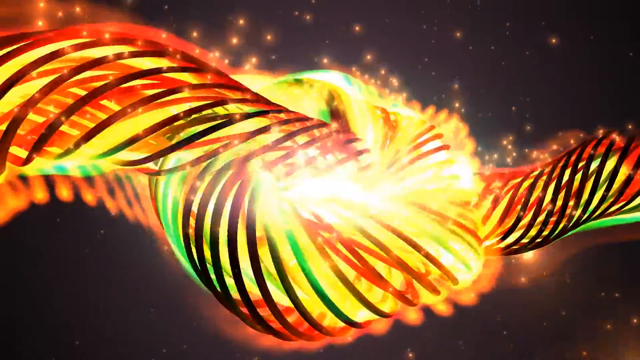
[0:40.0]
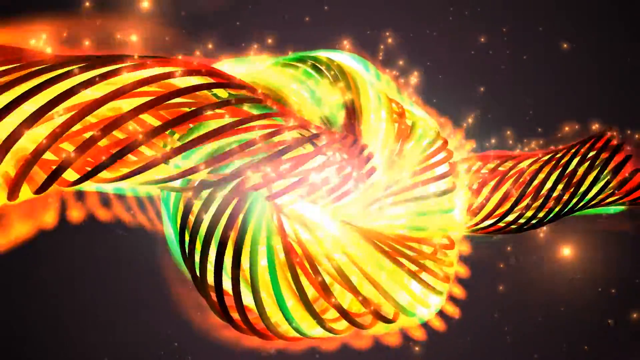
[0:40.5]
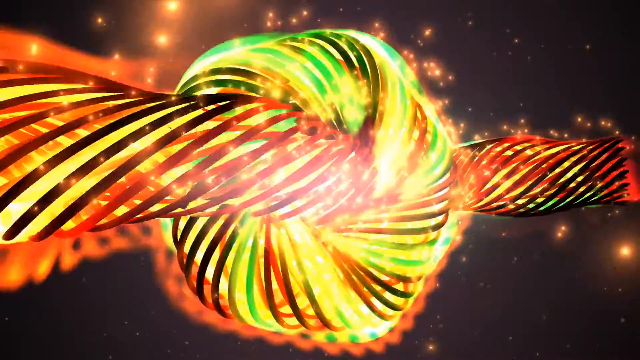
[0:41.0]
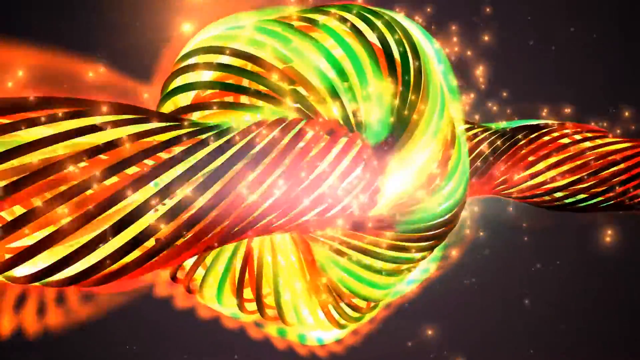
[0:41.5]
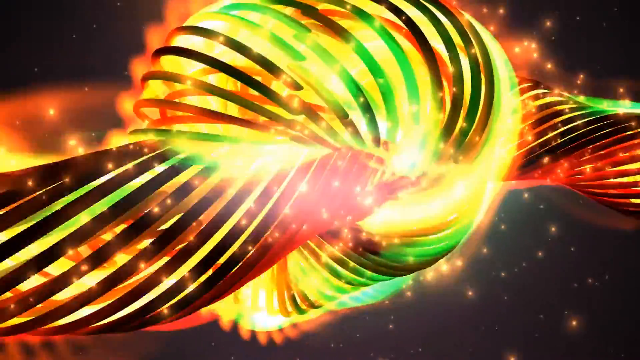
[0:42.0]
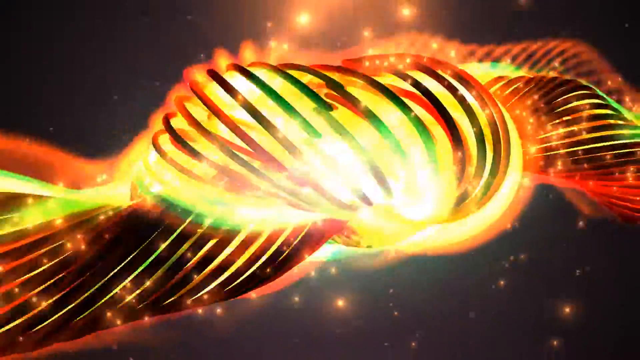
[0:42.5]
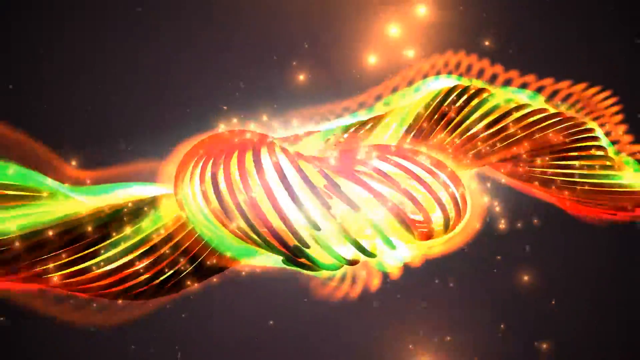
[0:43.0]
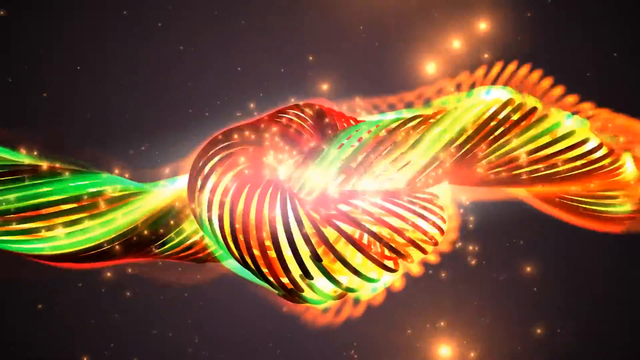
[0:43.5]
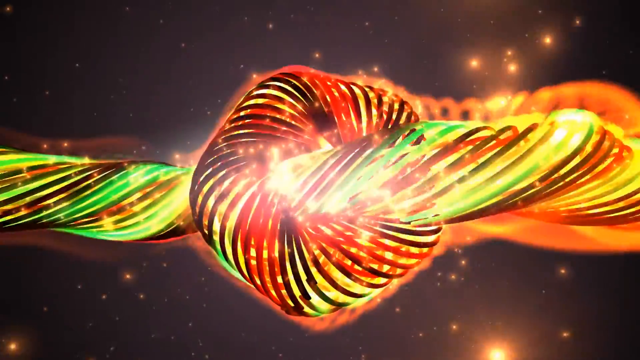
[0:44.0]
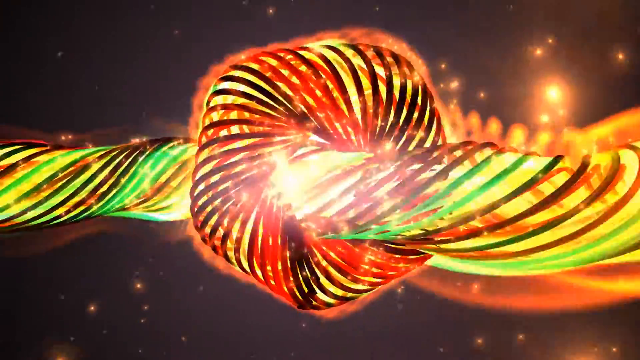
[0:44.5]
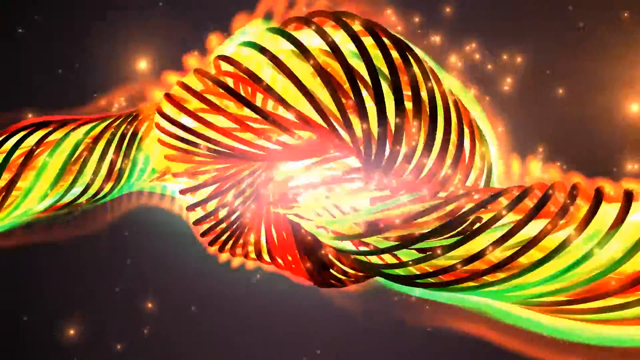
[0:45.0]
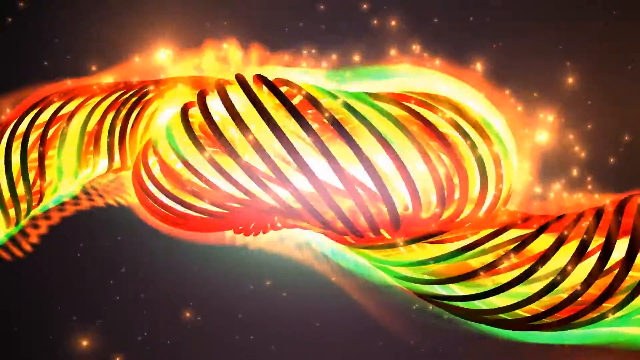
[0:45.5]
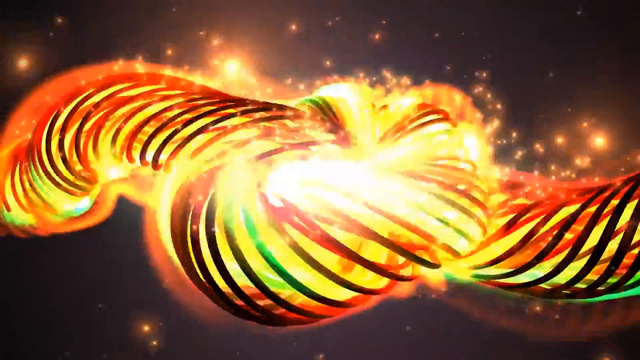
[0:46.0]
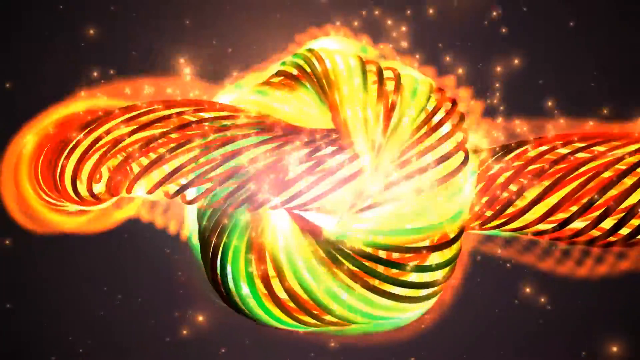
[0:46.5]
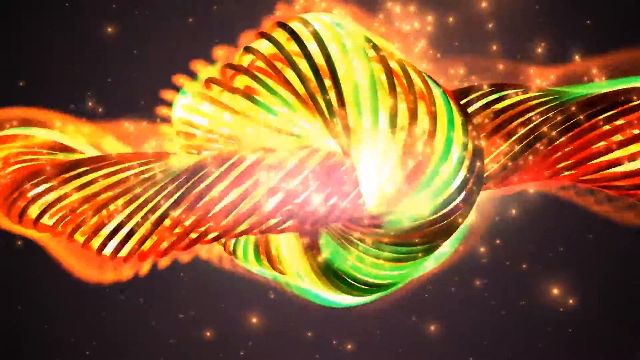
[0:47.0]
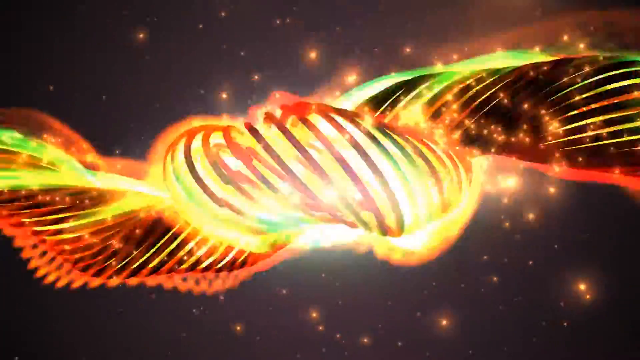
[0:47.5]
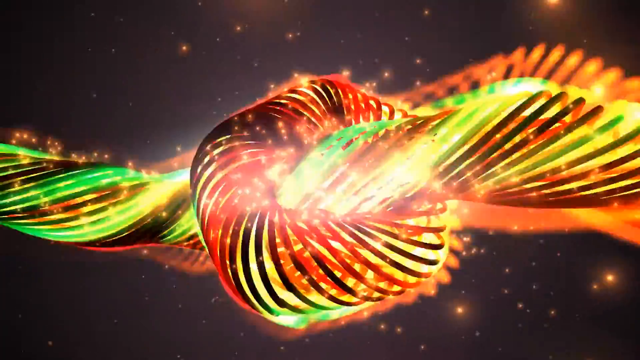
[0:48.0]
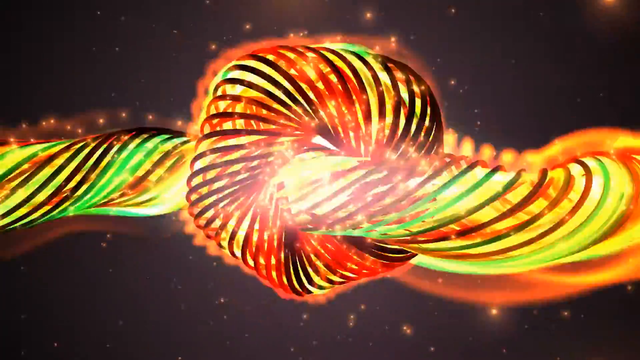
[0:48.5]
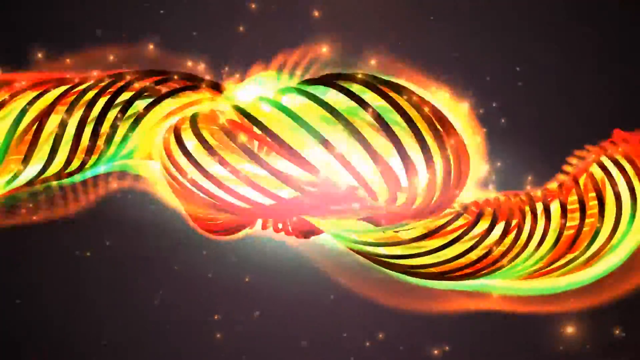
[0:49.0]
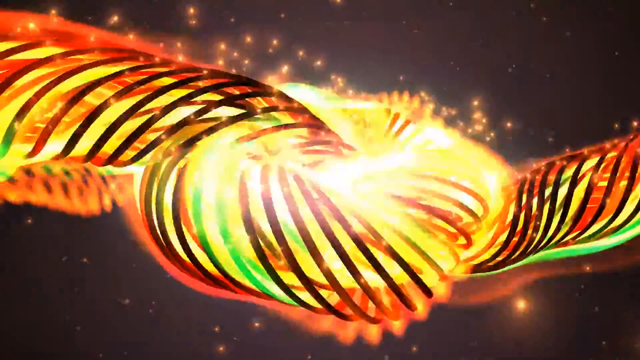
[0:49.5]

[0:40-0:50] The left side is closer in and up toward the top as the object turns; the left side goes up while the right goes down, then the right goes up while the left goes down. On the middle piece the coils are a little more separated, and it looks brighter in the center, more yellow and vibrant. A little of the coil hue comes off the bottom on the left side. As it twists, the camera slowly zooms out, with more little sparks coming off, especially across the top, moving to the right. The camera then zooms in super close on the center portion and back out, with the right side up high and the lower left side down lower. Every time the pieces go up high, a hue kind of shaped like a coil comes off, like a shadowy one, and the camera zooms out. Sparks shoot across and the camera zooms in. It is kind of twisting and turning, and the end on the left side is visible. It goes in toward the background and then out a little, almost like it is pulsating and vibrating as it moves. The hue is still all around it. In some parts the coils kind of separate a little so more of the inner core is visible, while in other parts they are closed in tighter so less of the core shows.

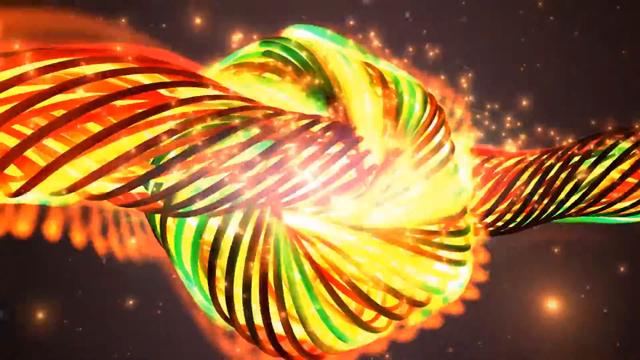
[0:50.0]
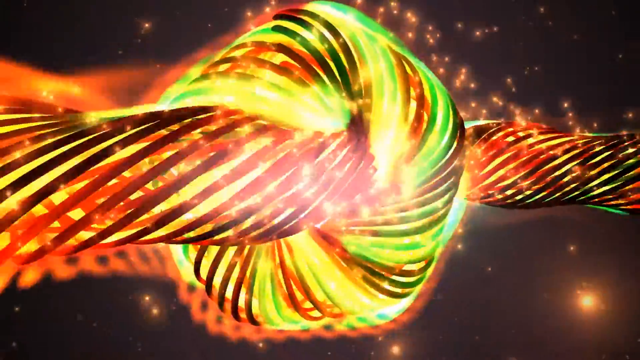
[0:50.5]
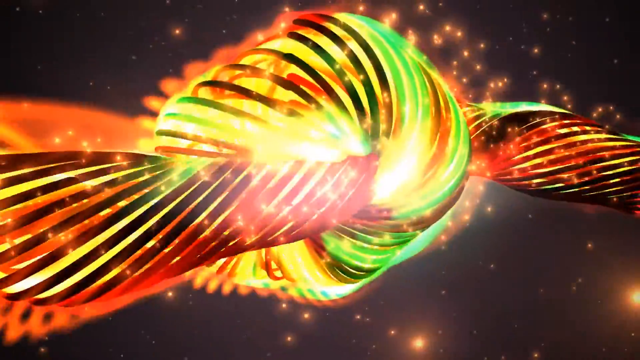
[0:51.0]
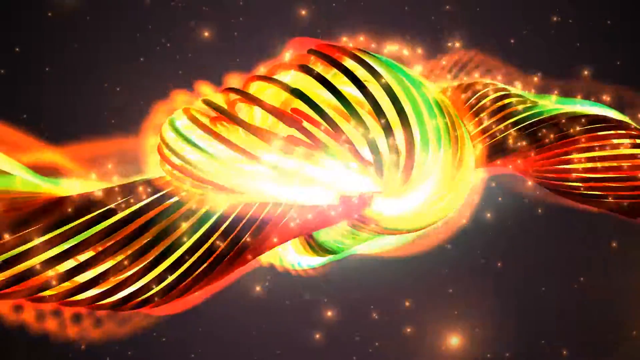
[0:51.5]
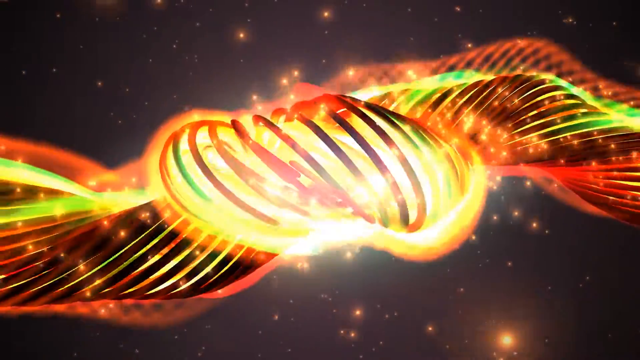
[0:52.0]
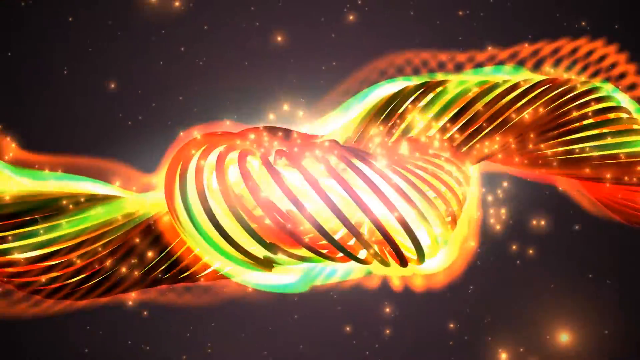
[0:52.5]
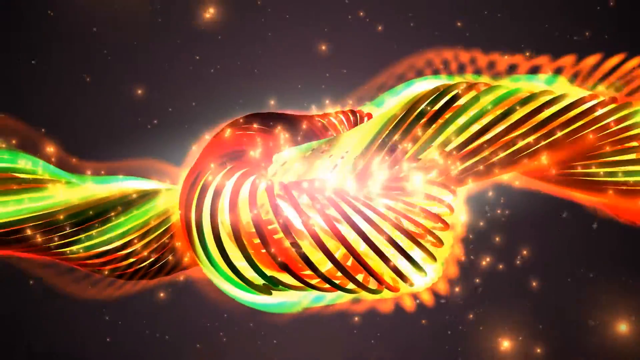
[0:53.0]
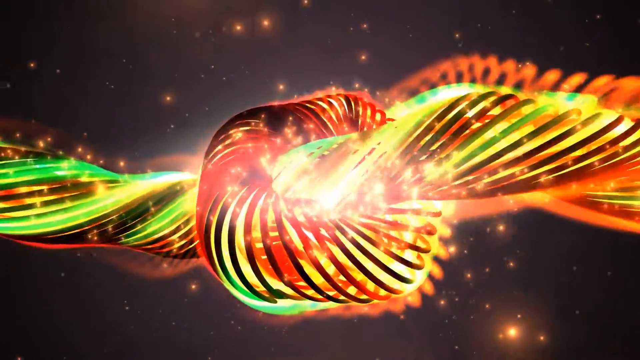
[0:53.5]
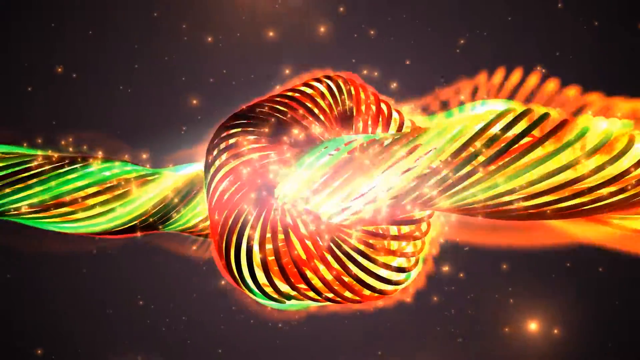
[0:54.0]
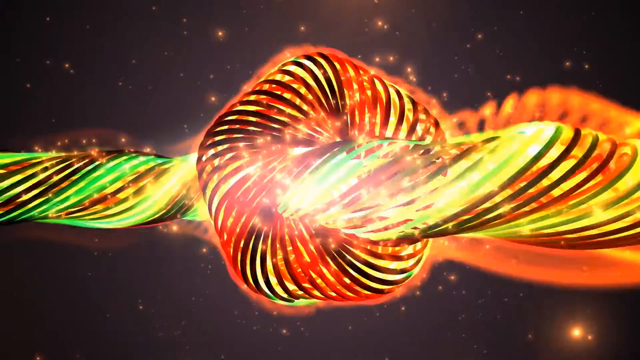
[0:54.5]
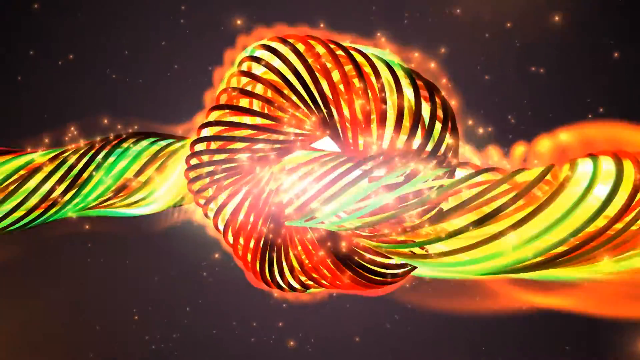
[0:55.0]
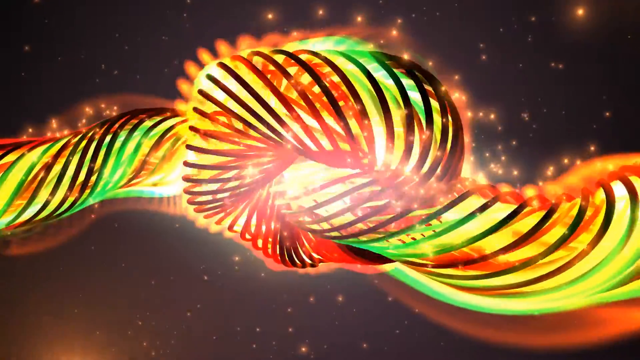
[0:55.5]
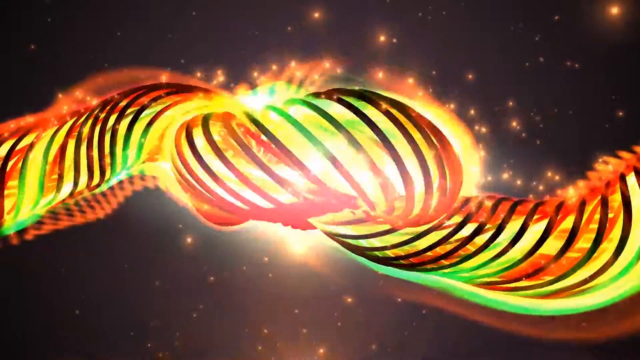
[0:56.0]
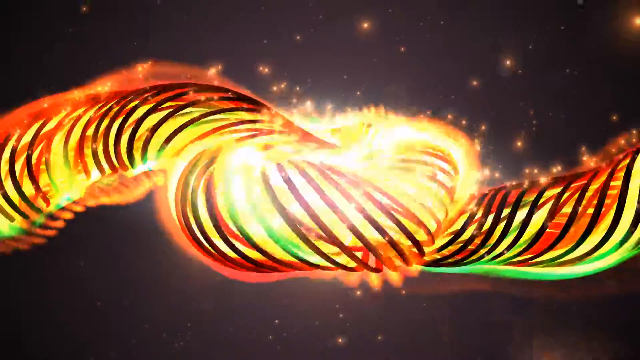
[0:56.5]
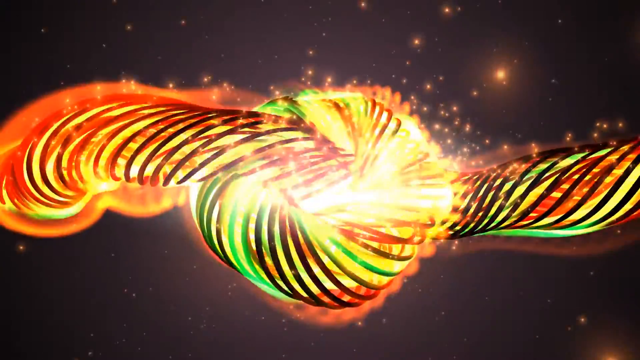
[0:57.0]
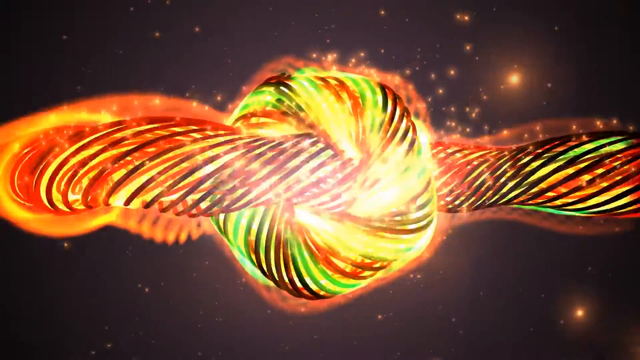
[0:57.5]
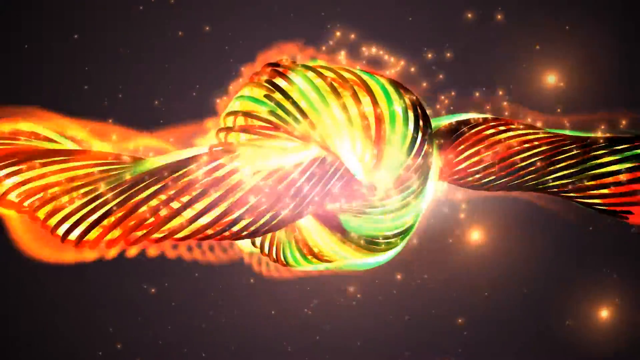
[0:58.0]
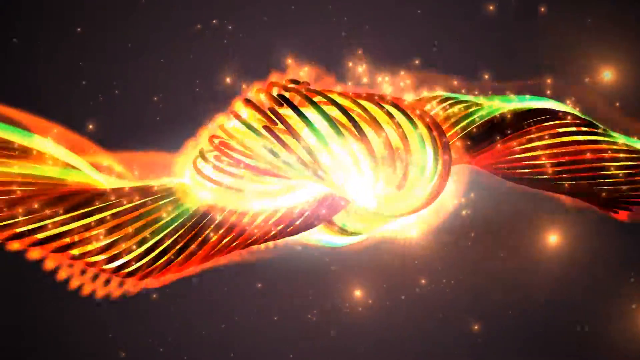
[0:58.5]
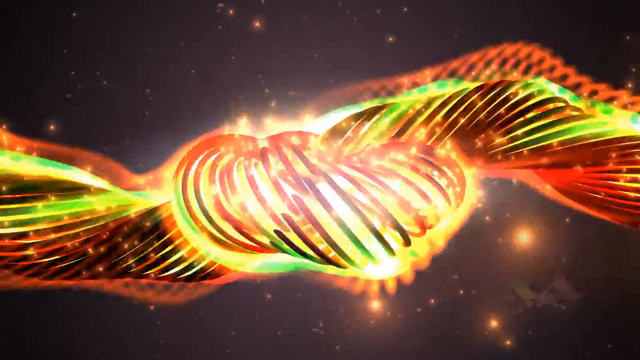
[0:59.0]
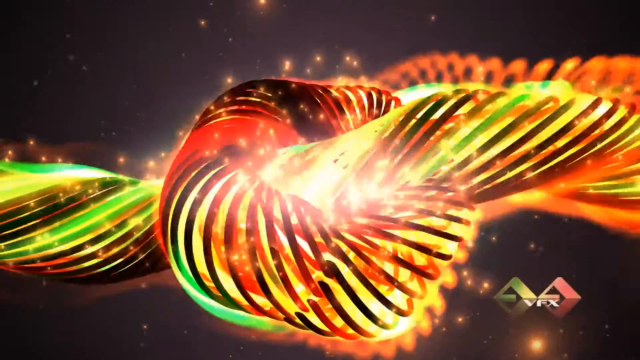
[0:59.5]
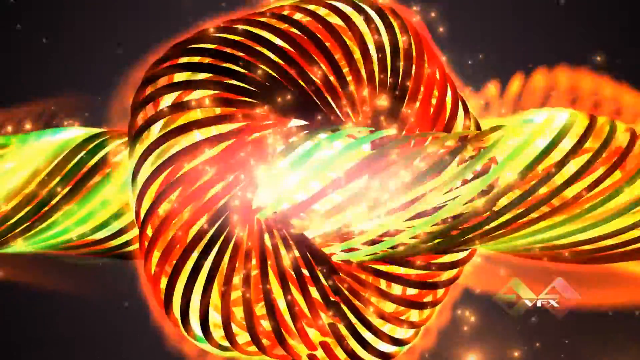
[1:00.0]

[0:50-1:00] The part running left to right looks more greenish inside, and the outside coils, especially on the left side, look like they are heating up to a brighter red. The center part is more white and yellow, glowing almost like a sun. The view is in tight on the image and kind of goes out. The object is slowing down and spinning a little. The right side goes up a little and the left side goes down as the top of the center piece it passes through comes toward the camera, and it spins out. Sparks go around it a little. It has slowed down a lot. As it spins, the left side gets a little greener and the right side a little more yellow, still pulsating in and out, slowly moving in with the camera and slowly out, with little sparkles coming off it and flame embers kind of dancing around. The view then goes super tight on the center portion, which turns kind of a darker color as the coils become more compressed. On one side of the spinning piece the coils are more separated, so more of the yellow shows; when it spins around to the back side, the coils are more constricted, showing more of the black coils and less of the yellow inside.